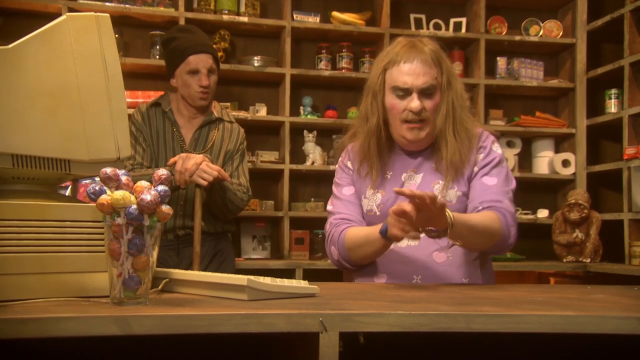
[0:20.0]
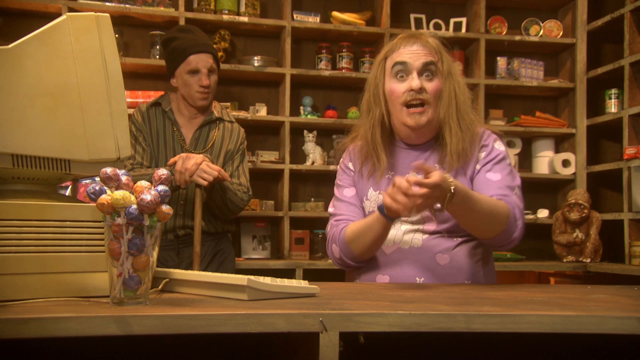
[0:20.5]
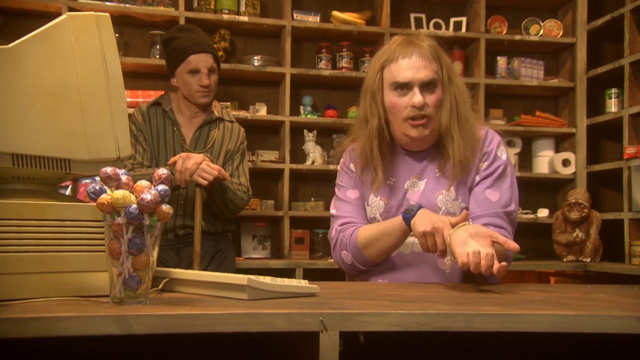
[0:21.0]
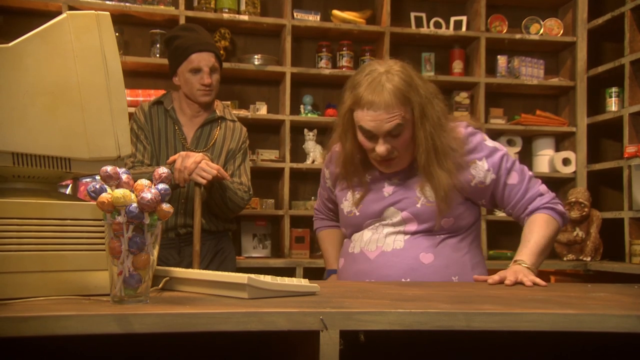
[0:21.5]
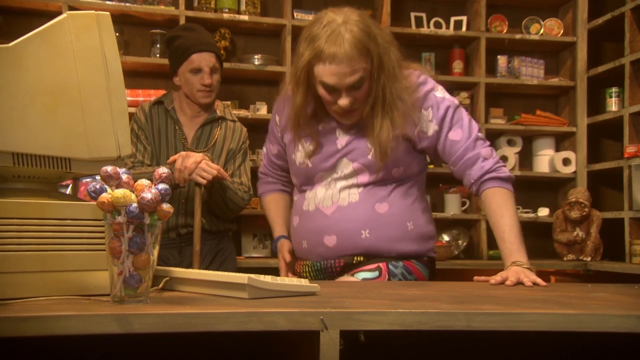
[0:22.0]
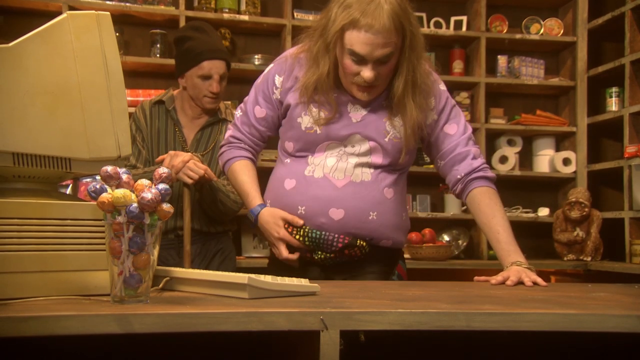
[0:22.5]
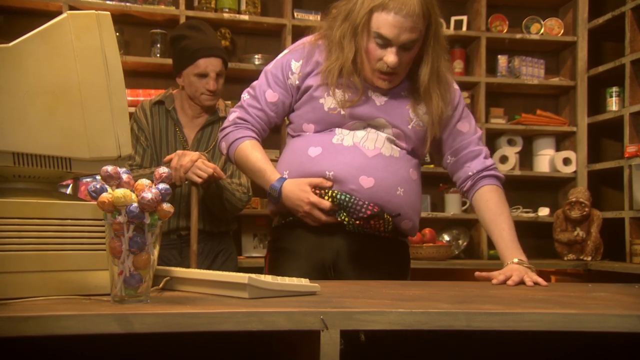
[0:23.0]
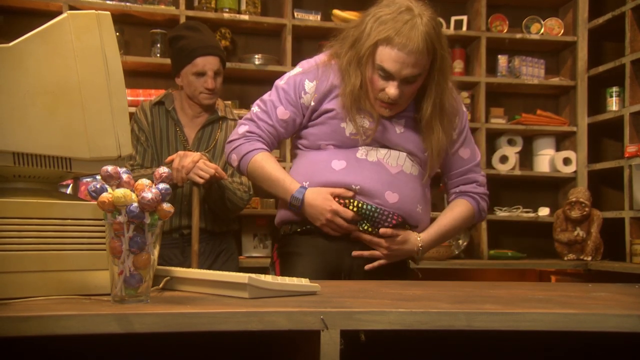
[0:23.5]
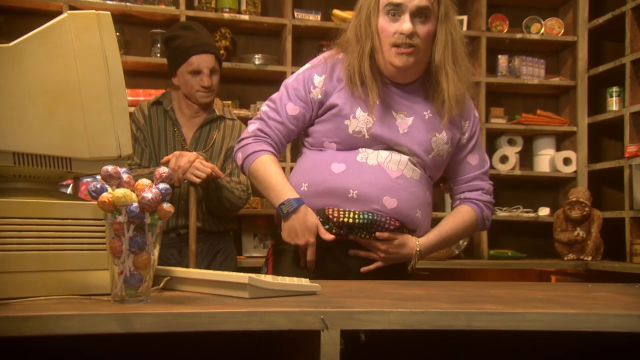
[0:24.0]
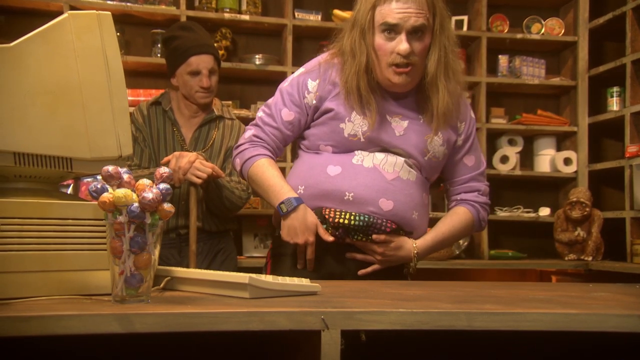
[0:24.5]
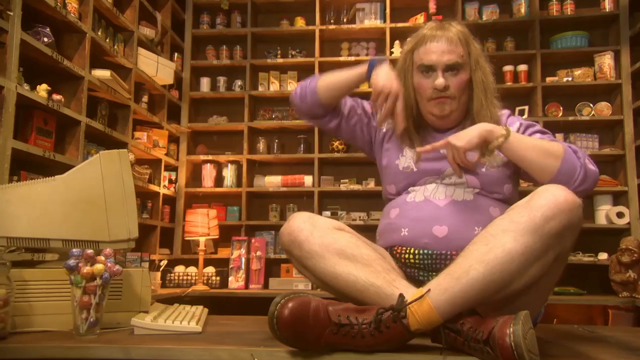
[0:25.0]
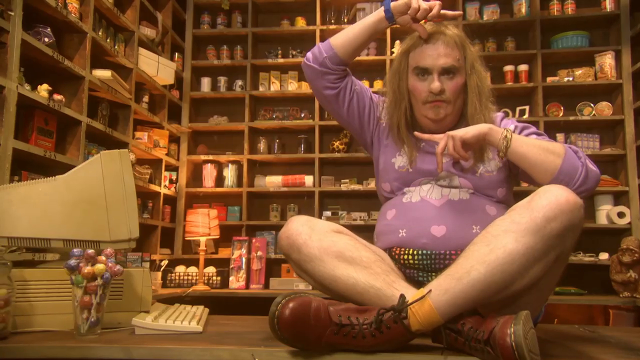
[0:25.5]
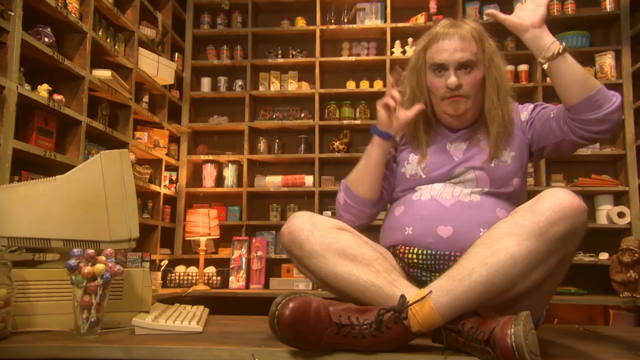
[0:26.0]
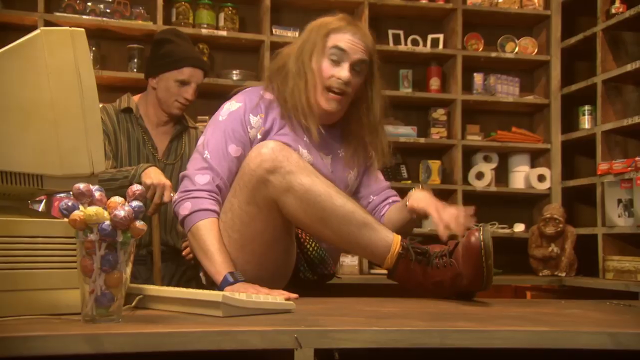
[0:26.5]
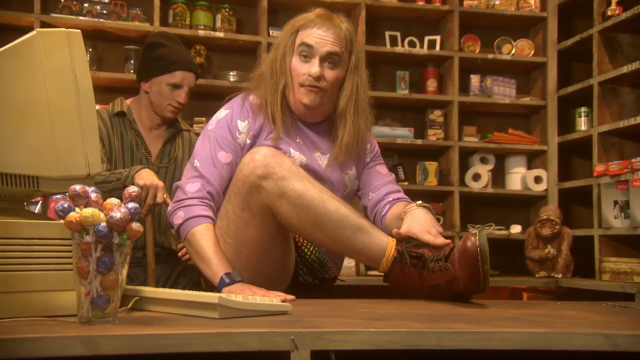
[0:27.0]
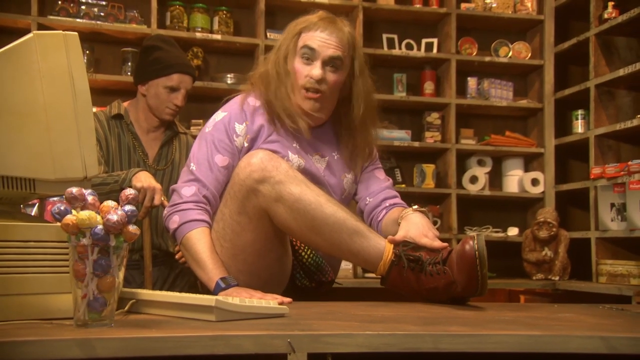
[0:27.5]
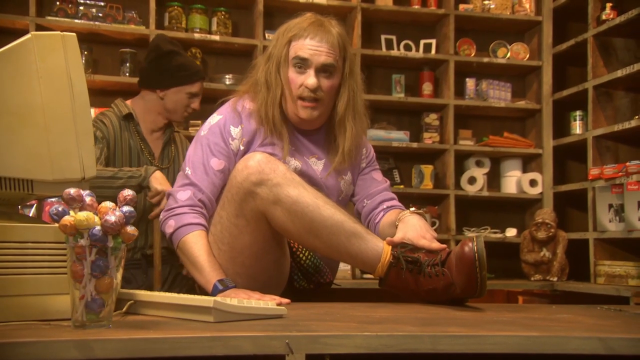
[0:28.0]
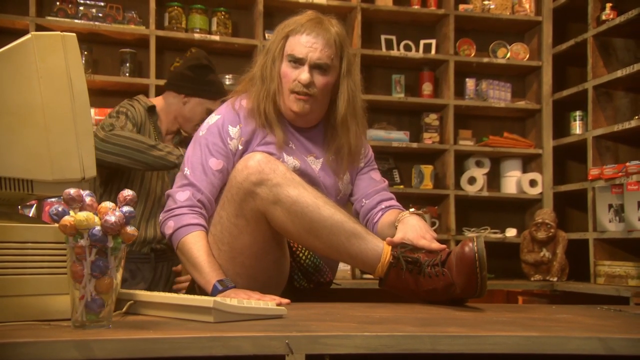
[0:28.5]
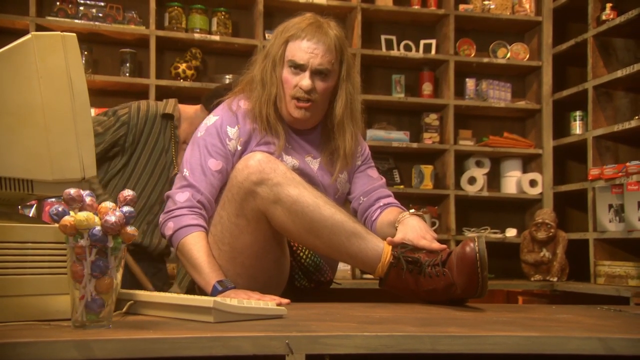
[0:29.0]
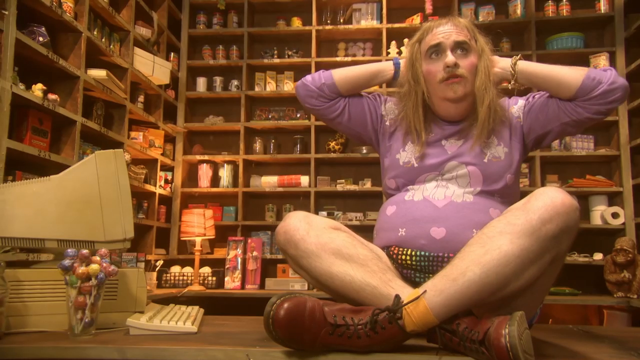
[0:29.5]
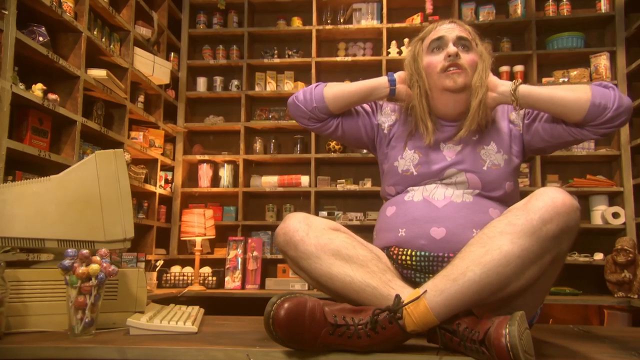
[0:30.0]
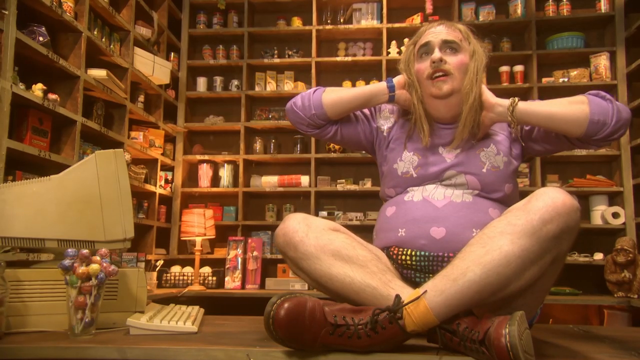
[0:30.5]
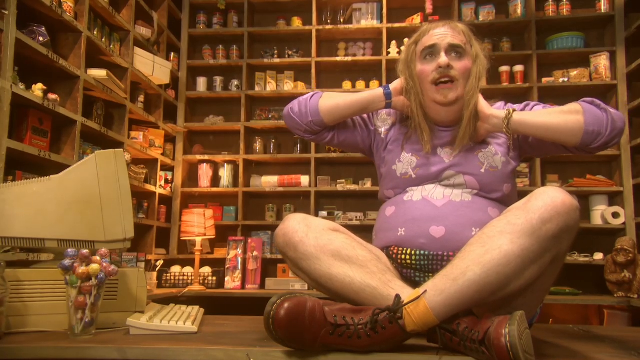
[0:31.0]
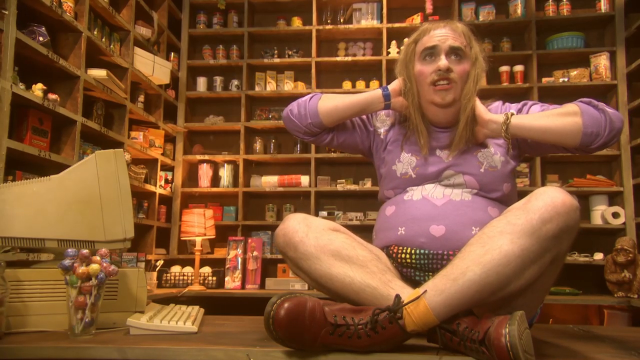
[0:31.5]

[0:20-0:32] The man in the pinkish shirt looks at his wrists. He is surrounded by shelves, and there is an old-fashioned computer and some suckers. A man with a broom, wearing a green striped shirt and a hat, stands in the background, kind of just watching the man in the pink shirt. He seems to have an all-colored fanny pack, looks down, and points to his pants or shorts. Suddenly he does something like Madonna's Vogue pose. Next he is up on the counter pointing to his shoe; he has on green socks and a brownish shoe, and he shakes his head no. Then he sits on the counter cross-legged.